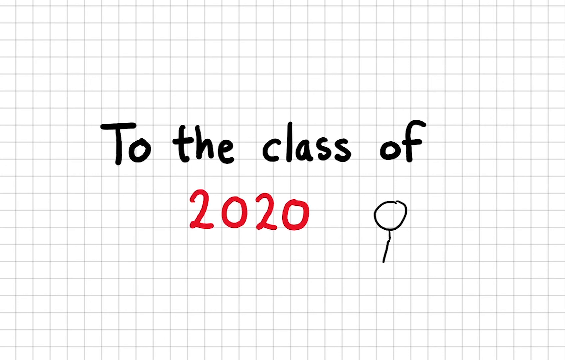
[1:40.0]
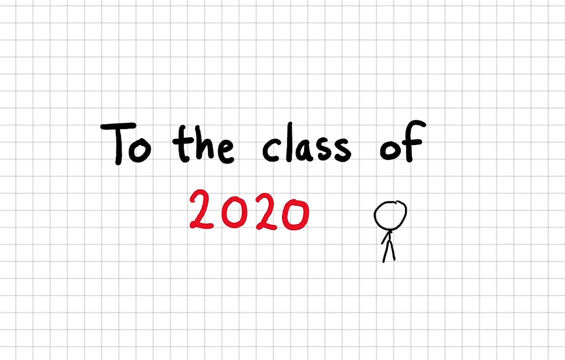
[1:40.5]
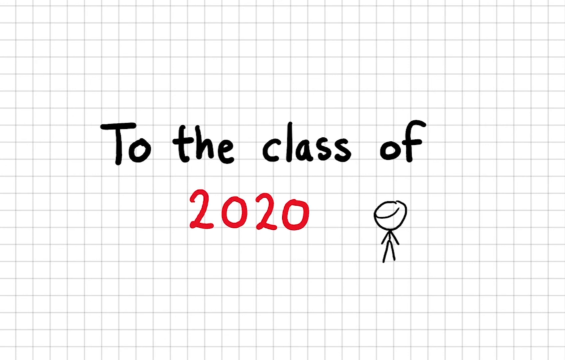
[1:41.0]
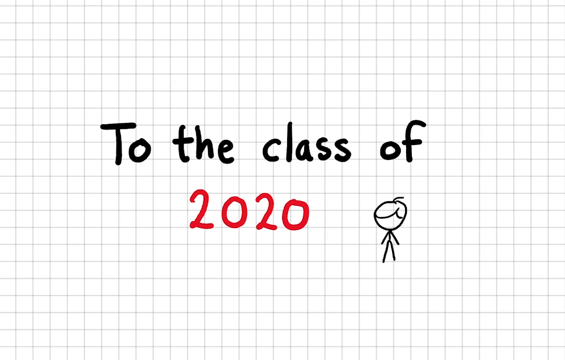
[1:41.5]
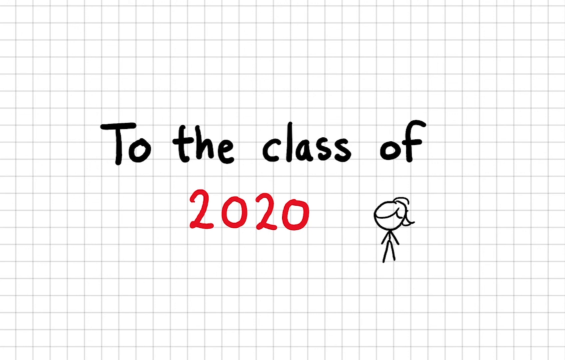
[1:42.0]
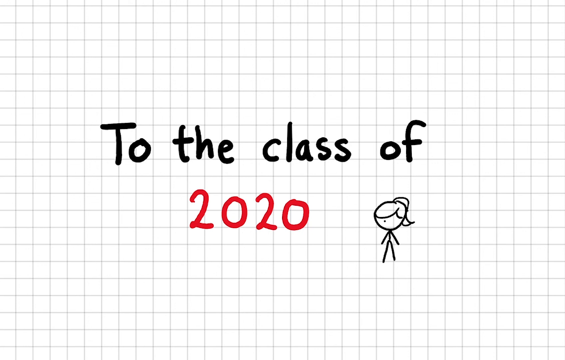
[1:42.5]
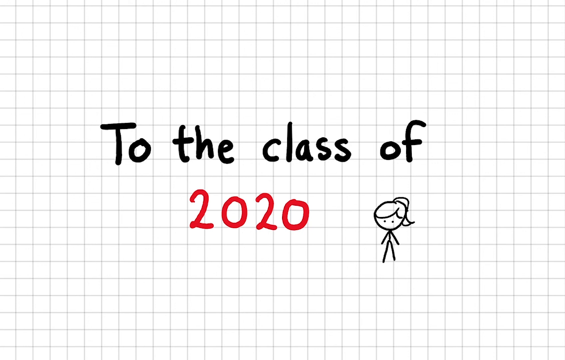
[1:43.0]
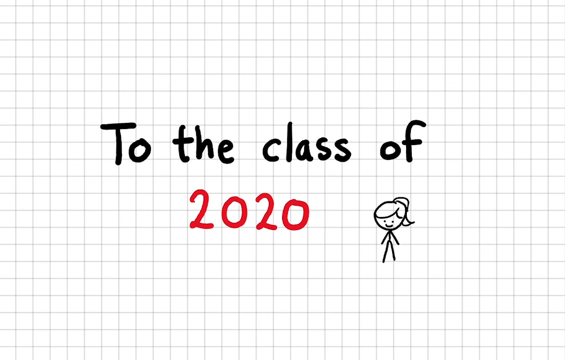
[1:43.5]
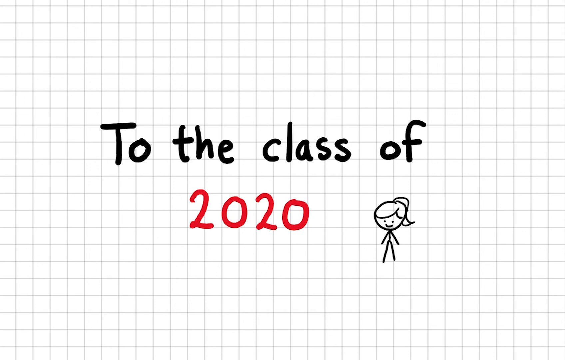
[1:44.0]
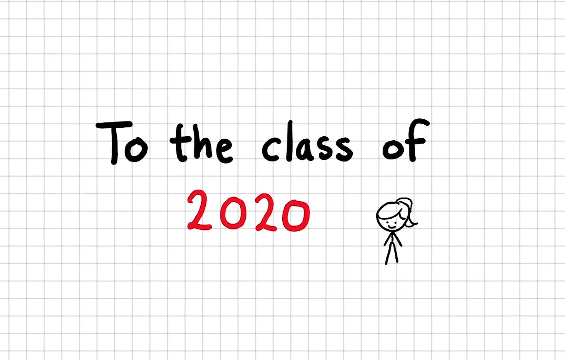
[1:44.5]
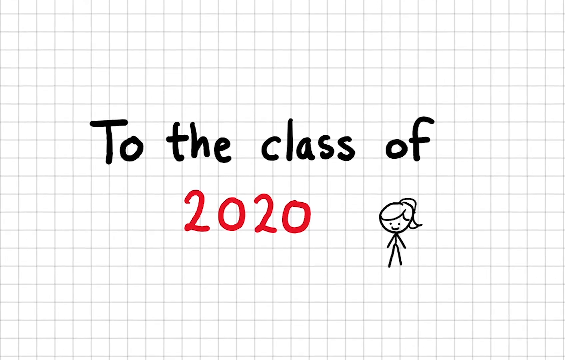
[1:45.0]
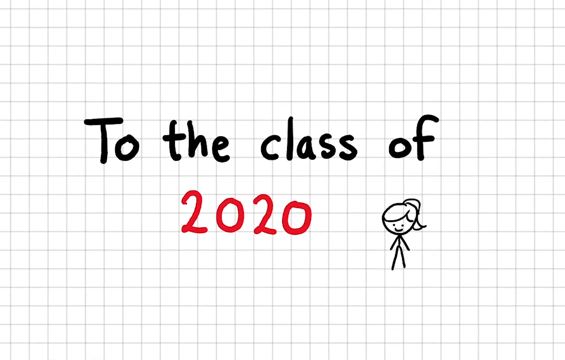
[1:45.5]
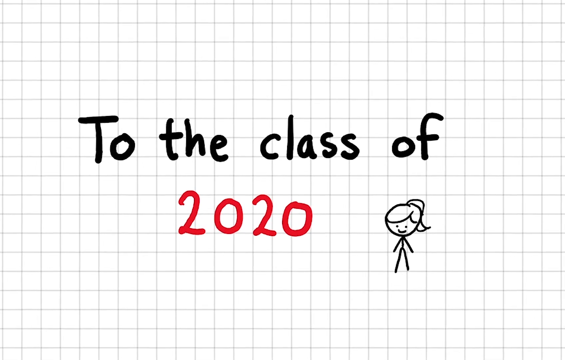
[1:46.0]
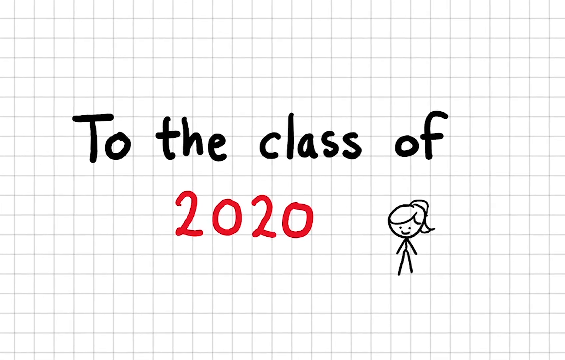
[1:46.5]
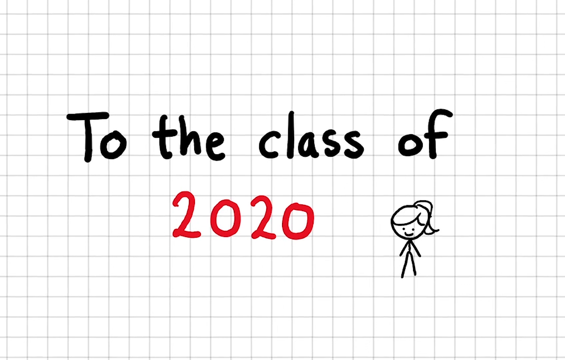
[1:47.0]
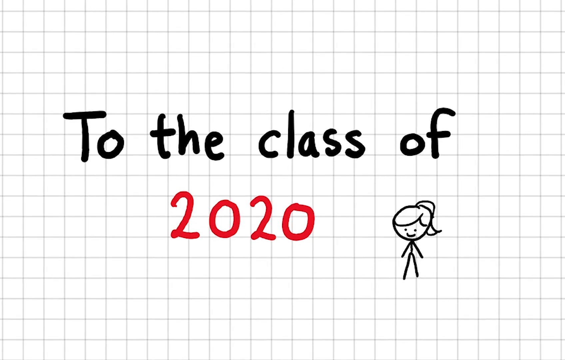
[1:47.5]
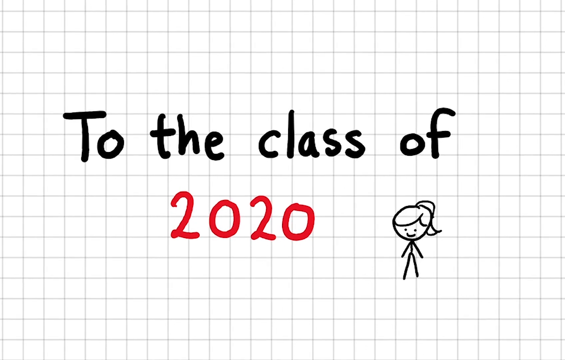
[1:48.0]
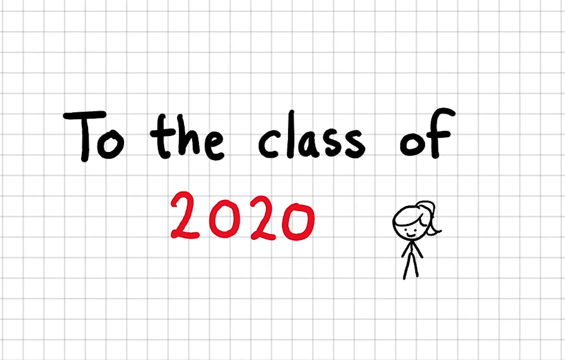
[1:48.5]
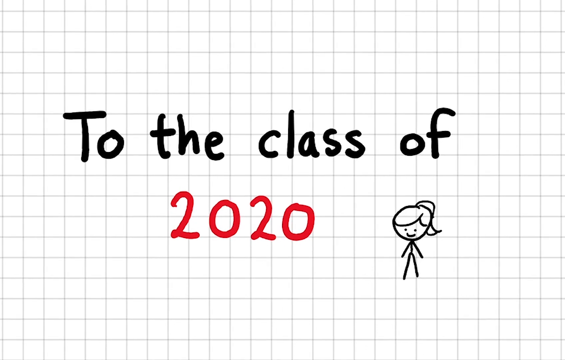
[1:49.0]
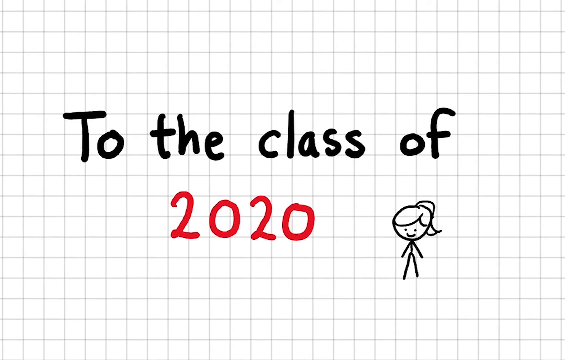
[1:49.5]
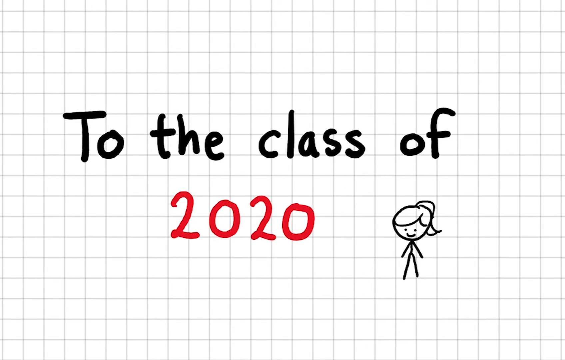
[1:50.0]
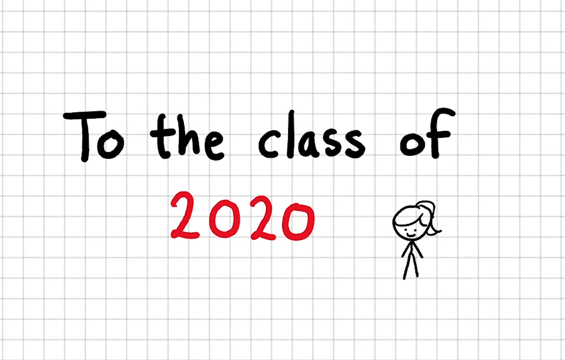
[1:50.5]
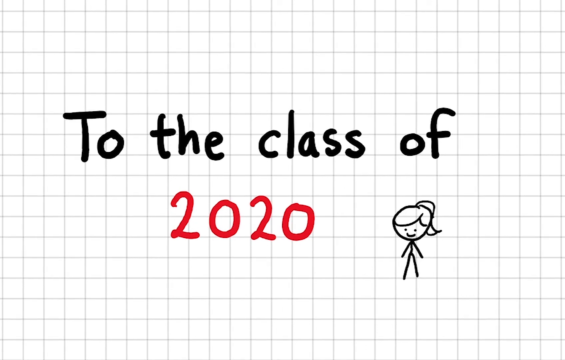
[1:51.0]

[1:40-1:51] The text reads "to the class of 2020", with "to the class of" in black and "2020" in red. A stickman with more detail is illustrated on the right-hand side of the 2020; this one is female, with hair and small dotted eyes. The view zooms into the text with the character. The video ends on the outro of the message to the class of 2020, drawn in black lines, with the blocks symmetrical.